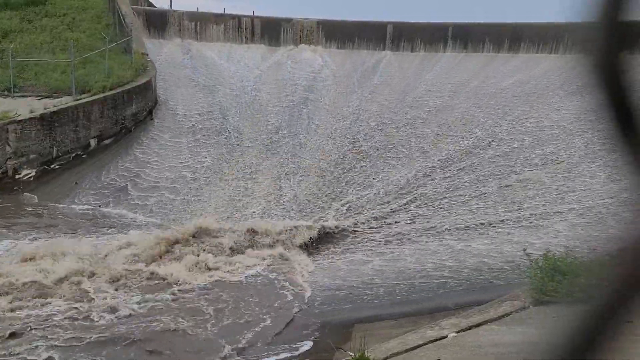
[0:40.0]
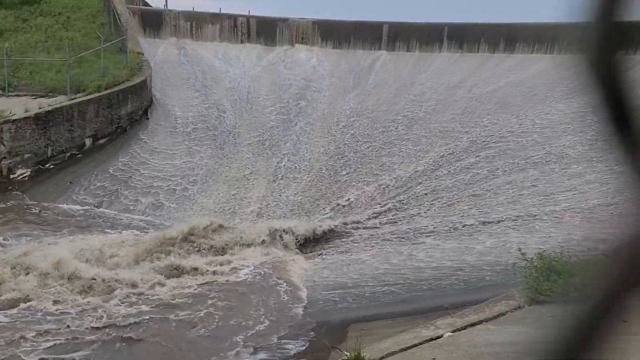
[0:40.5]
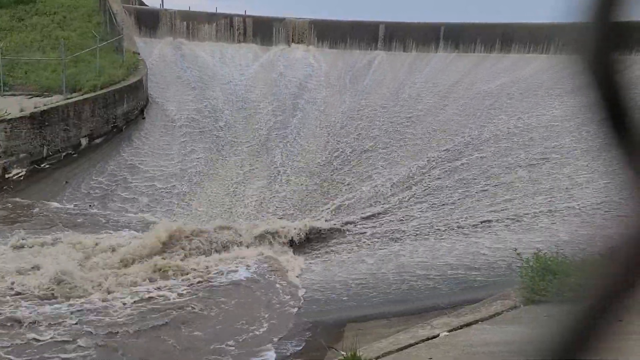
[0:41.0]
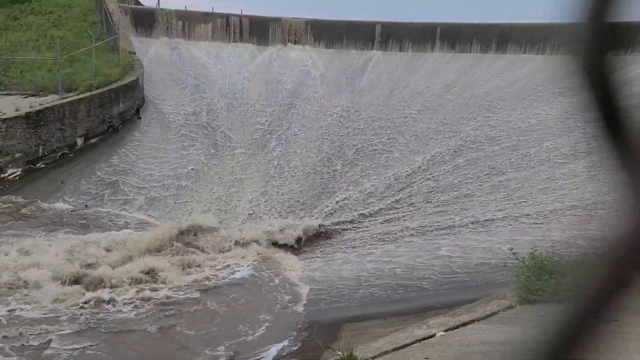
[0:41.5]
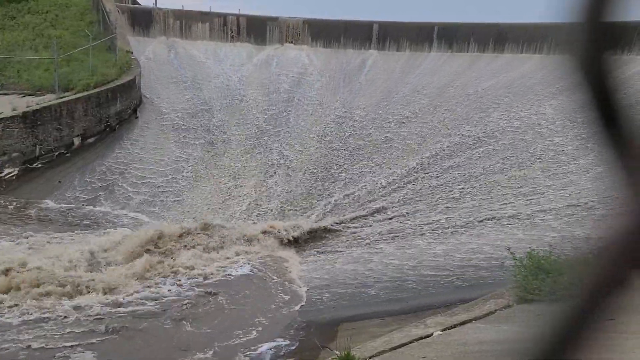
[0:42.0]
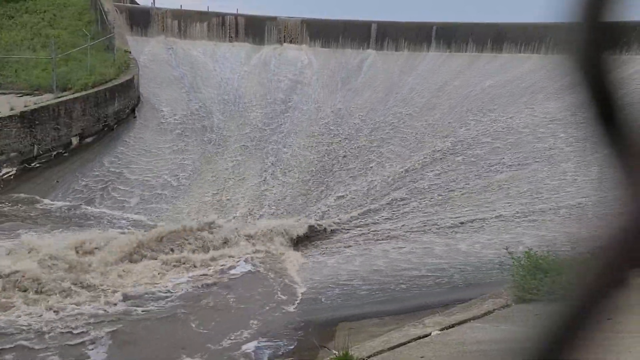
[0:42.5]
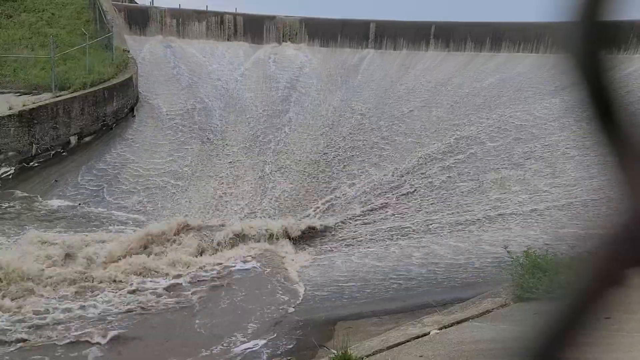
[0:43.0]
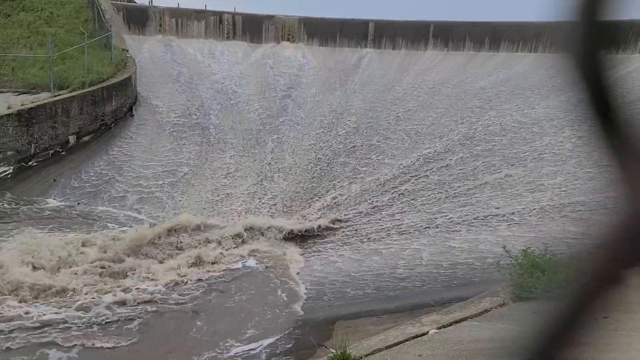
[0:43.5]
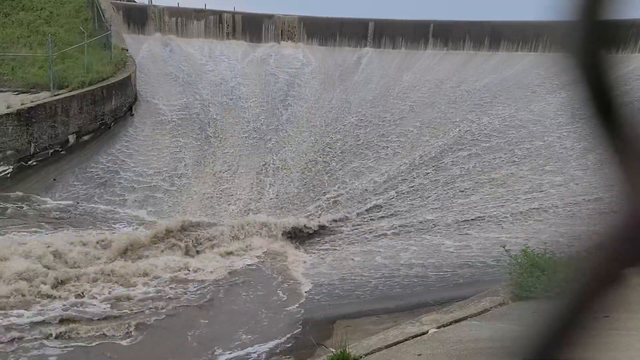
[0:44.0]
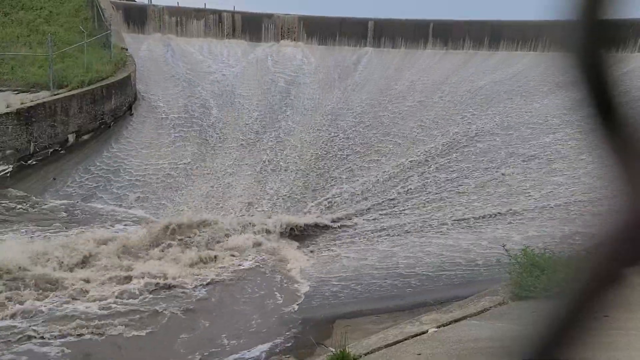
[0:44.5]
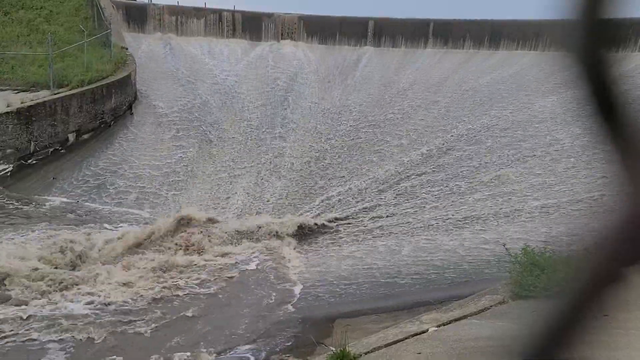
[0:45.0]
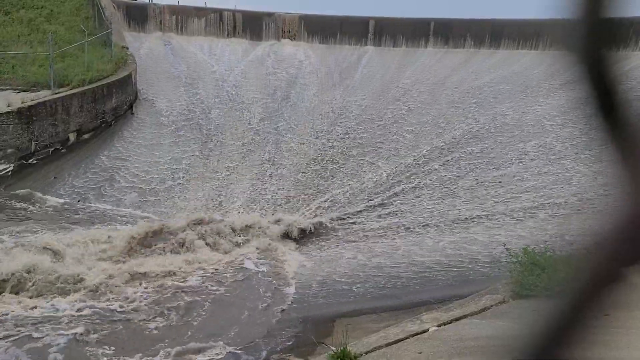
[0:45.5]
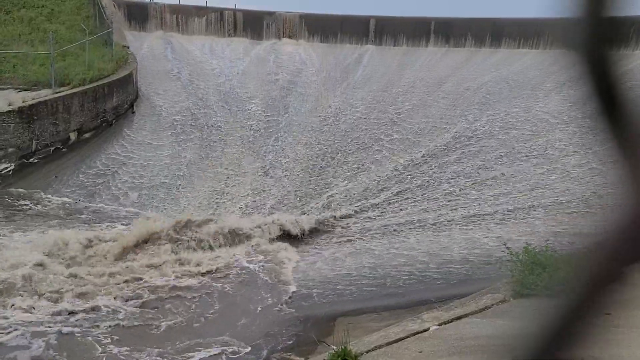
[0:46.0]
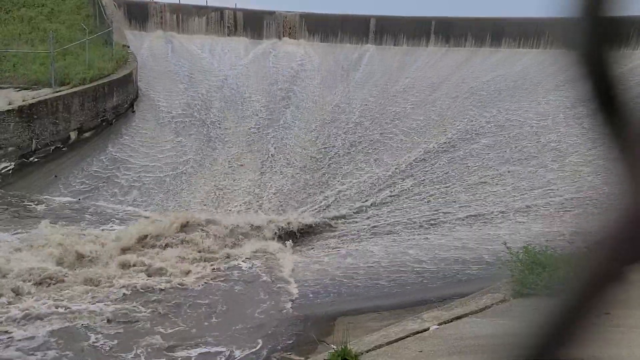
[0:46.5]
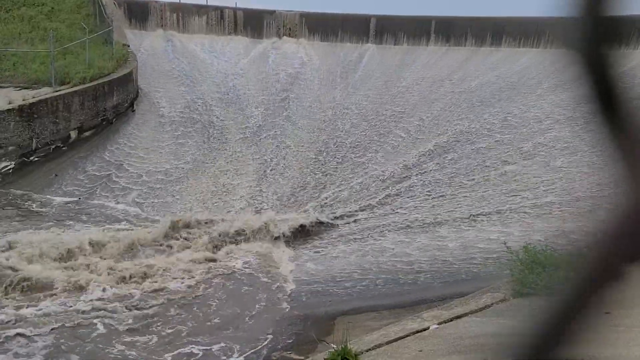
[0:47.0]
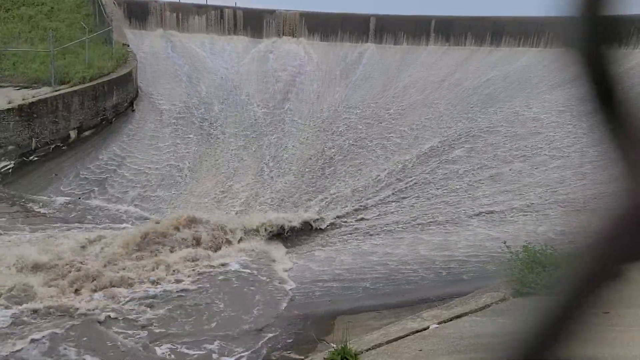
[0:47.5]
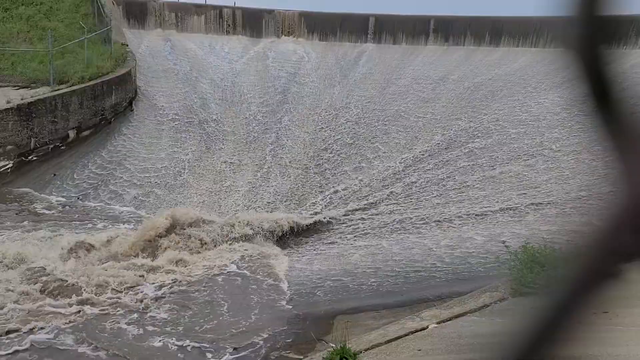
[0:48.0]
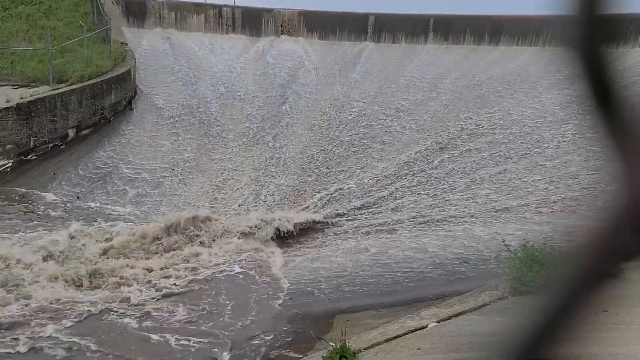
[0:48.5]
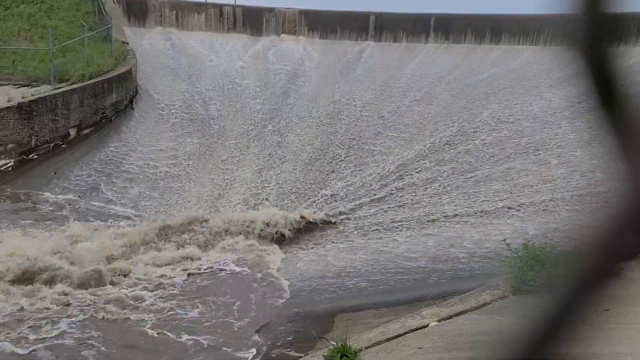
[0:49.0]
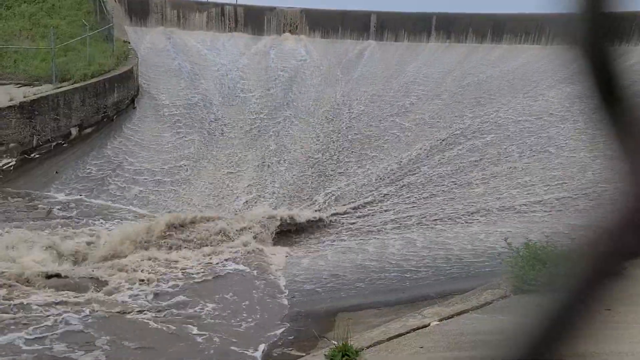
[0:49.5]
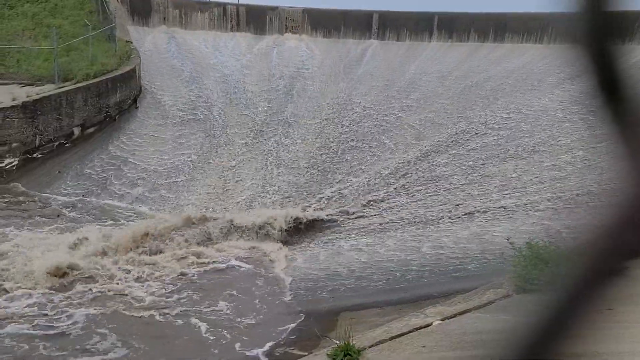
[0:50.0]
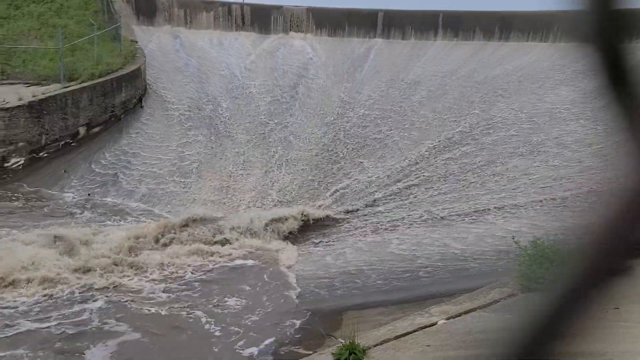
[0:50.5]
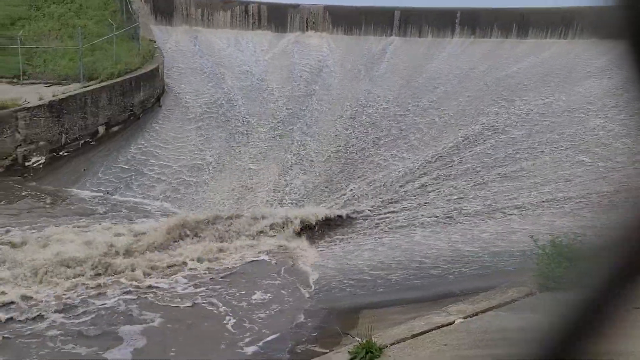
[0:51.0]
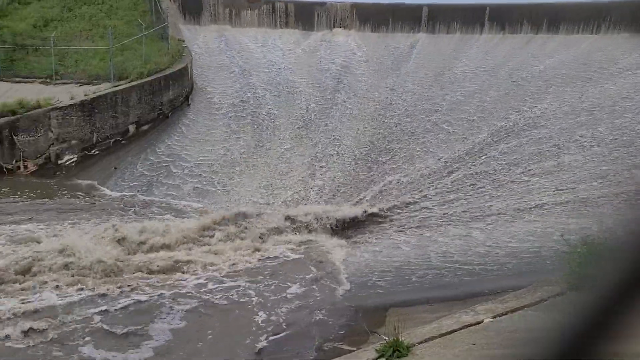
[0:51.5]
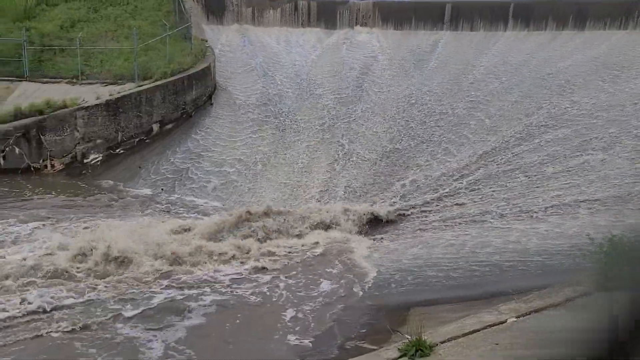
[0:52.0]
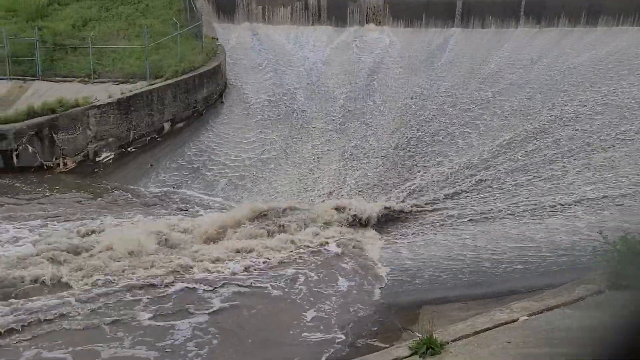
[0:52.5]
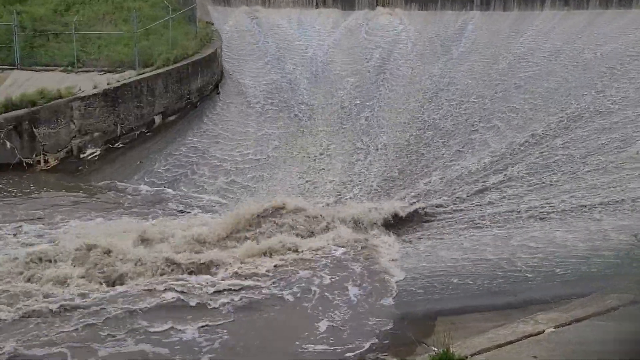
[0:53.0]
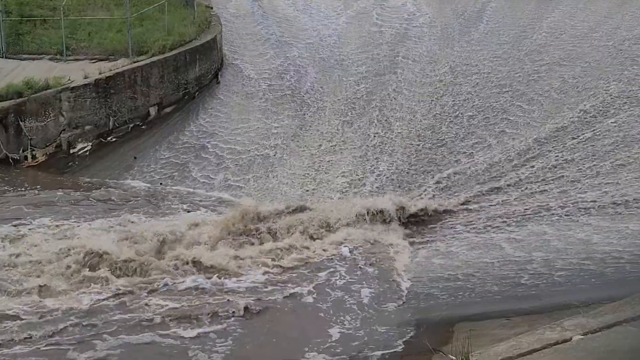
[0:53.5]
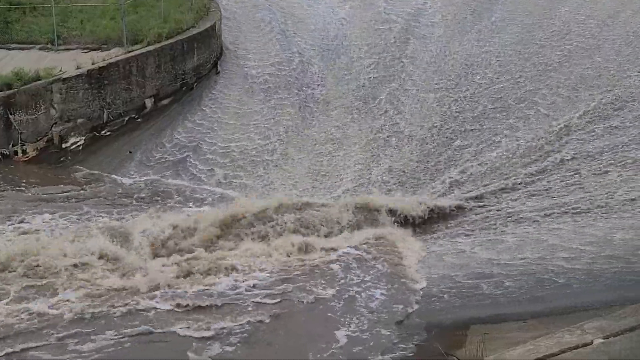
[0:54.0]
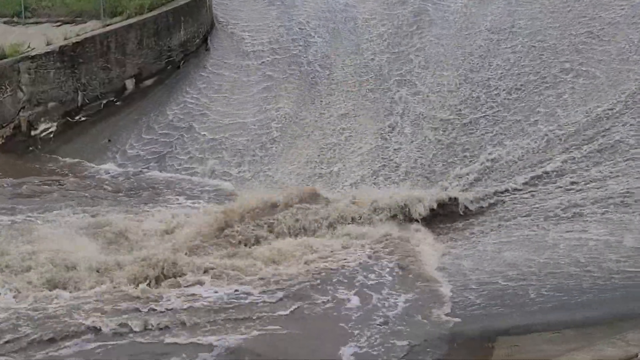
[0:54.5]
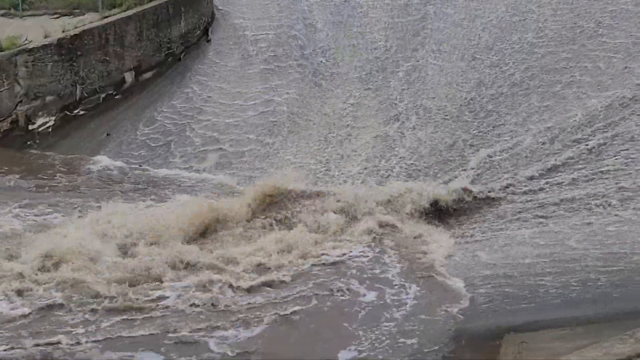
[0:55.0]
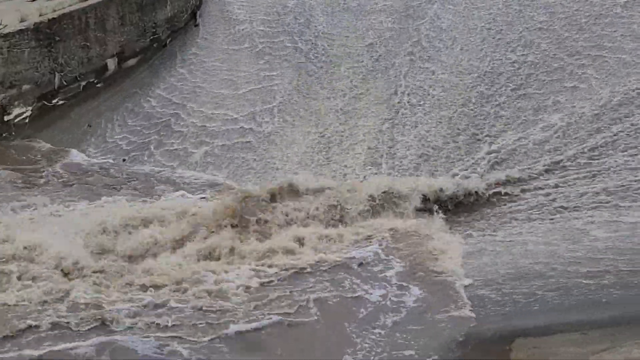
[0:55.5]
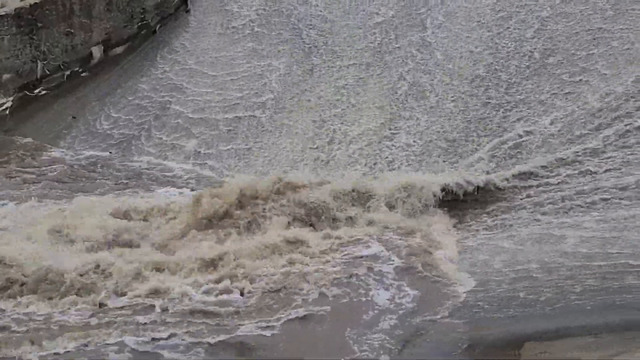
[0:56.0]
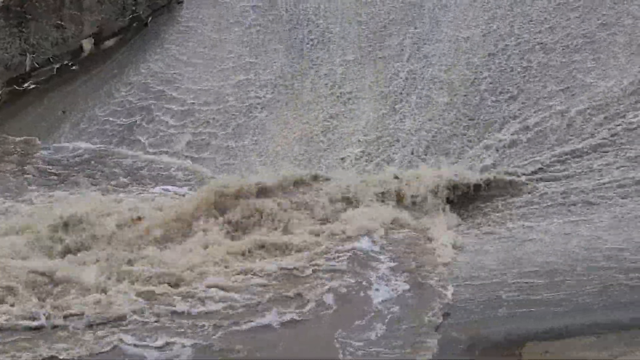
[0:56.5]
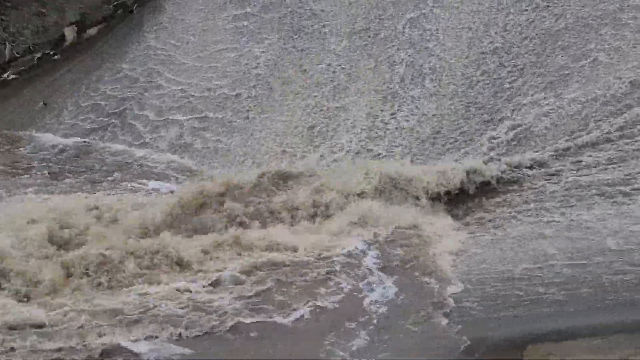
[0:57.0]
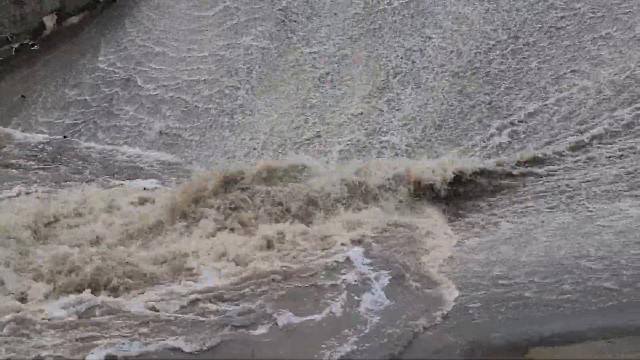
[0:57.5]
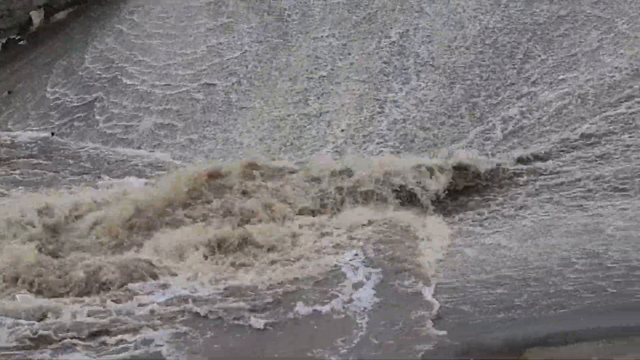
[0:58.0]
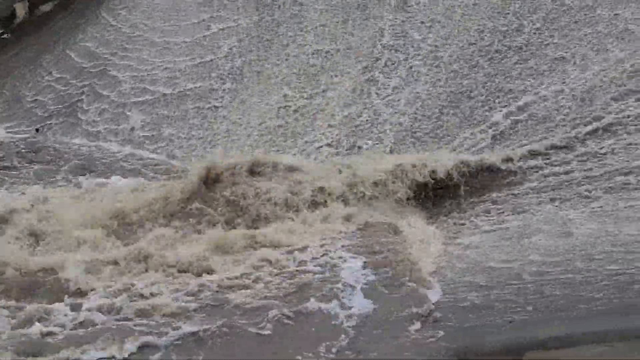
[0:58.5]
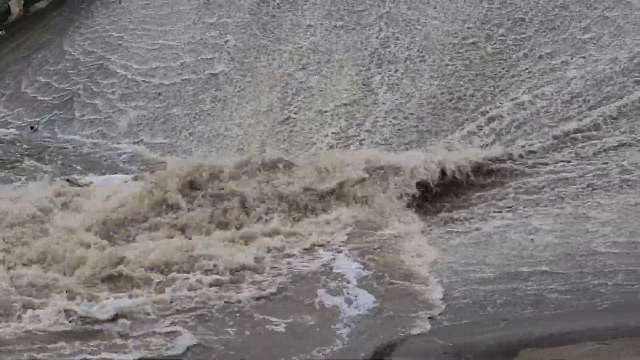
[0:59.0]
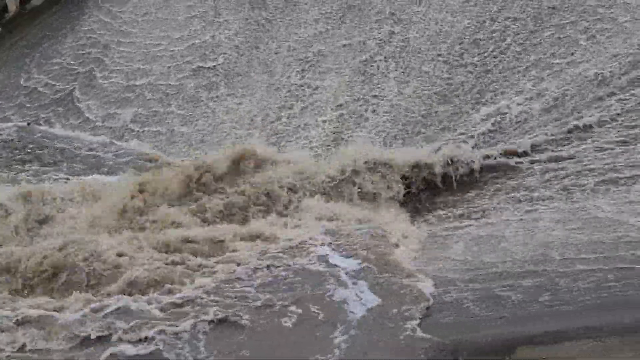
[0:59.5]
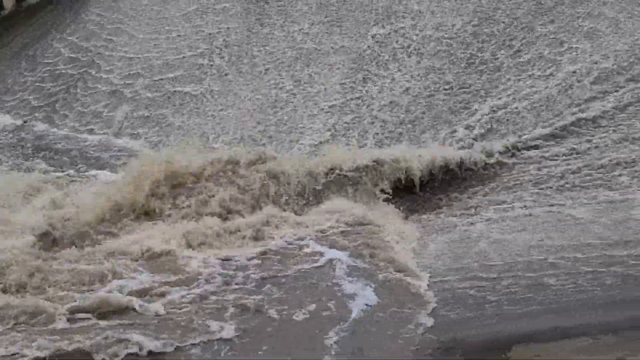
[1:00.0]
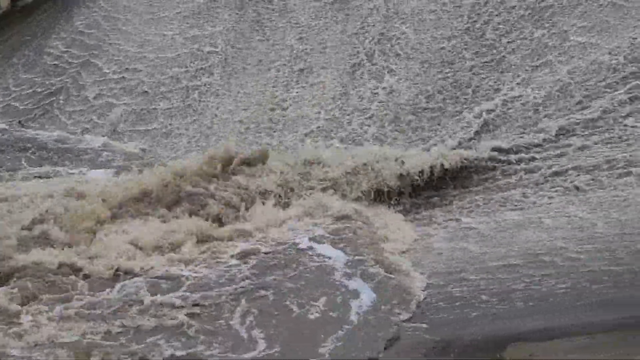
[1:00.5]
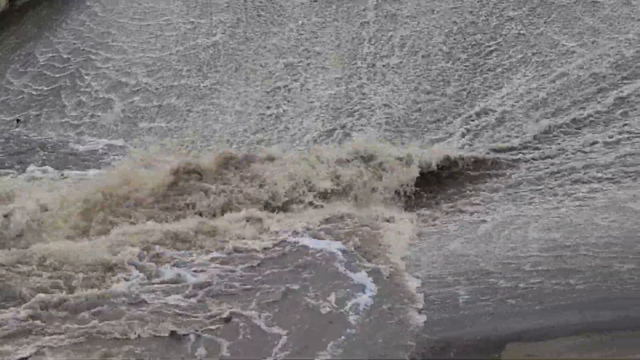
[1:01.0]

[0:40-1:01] More footage shows the same curved water coming down into the main body of water. The camera zooms in on the main part where the water enters the big body of water, and more water appears to pour in. The gushing water shows a lot of whiteness, though most of it is a muddy brown color. The camera stays centered on this part of the water as it gushes out and pours in, making wavy patterns in the water.